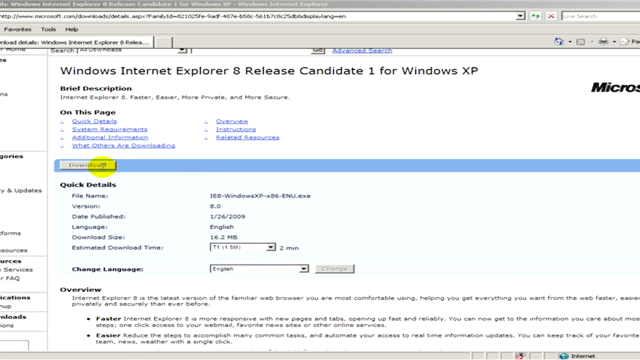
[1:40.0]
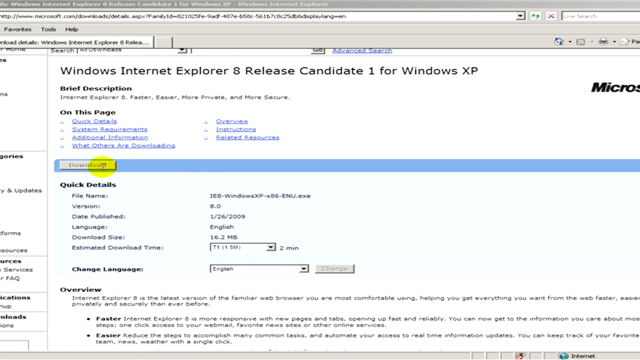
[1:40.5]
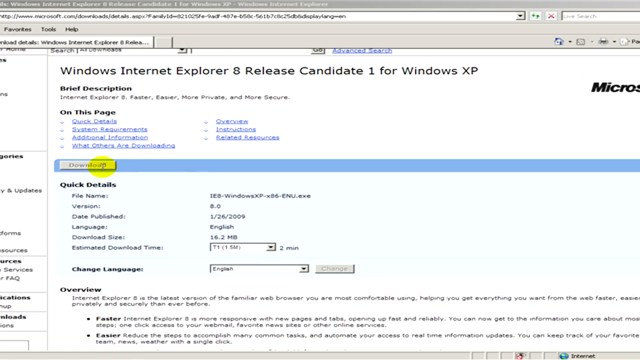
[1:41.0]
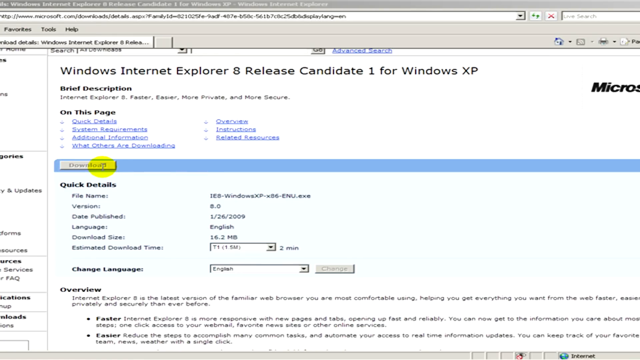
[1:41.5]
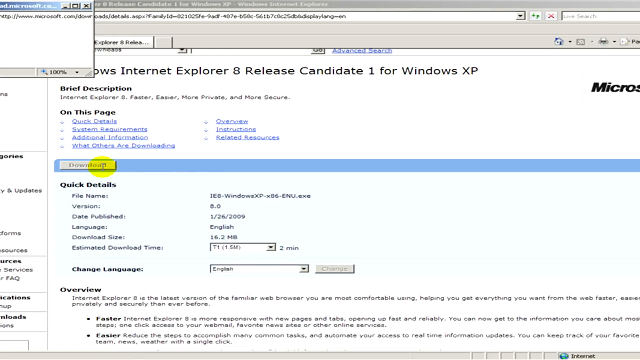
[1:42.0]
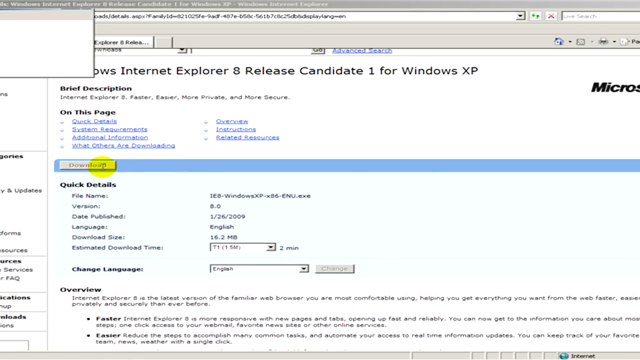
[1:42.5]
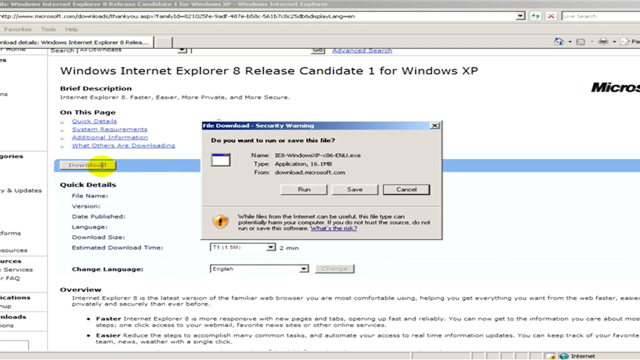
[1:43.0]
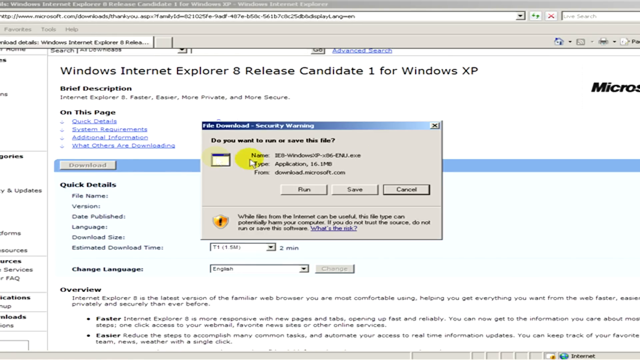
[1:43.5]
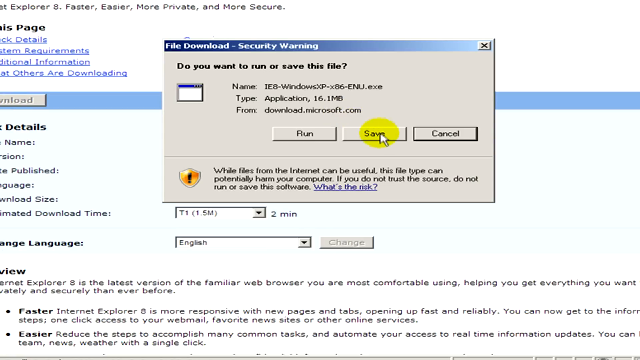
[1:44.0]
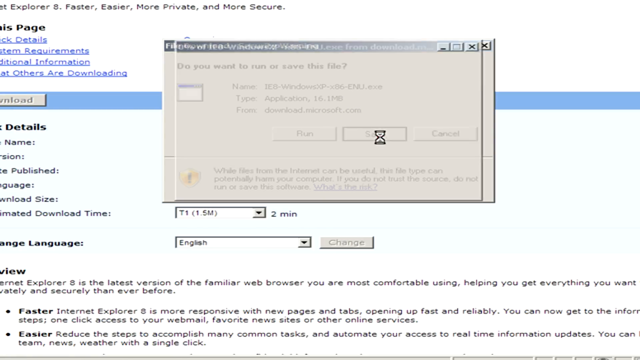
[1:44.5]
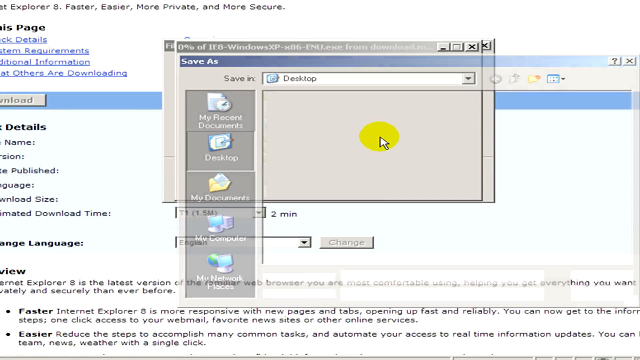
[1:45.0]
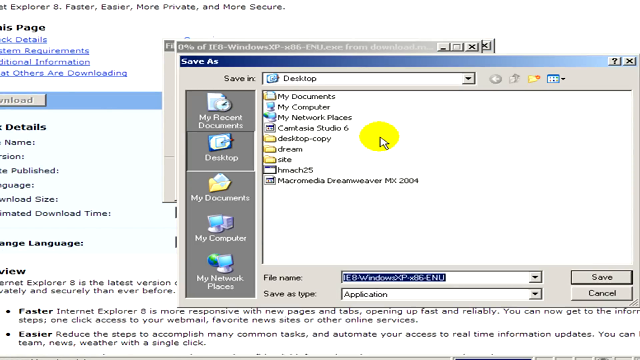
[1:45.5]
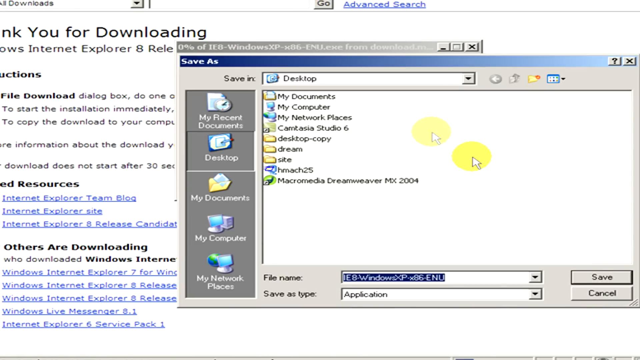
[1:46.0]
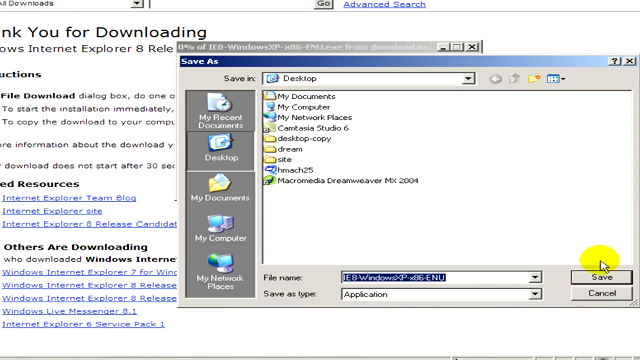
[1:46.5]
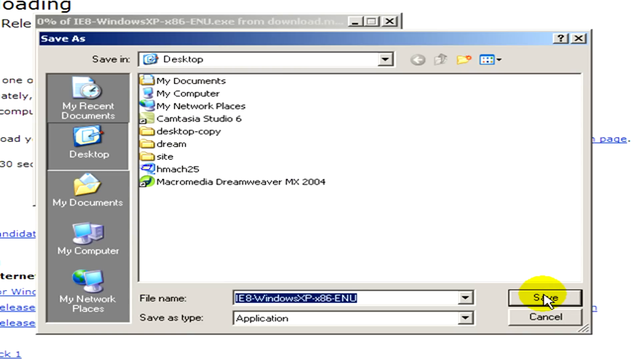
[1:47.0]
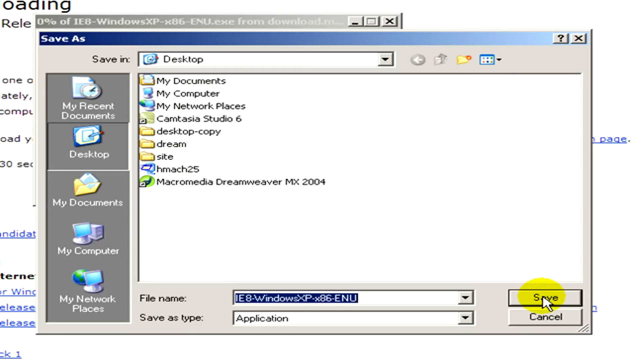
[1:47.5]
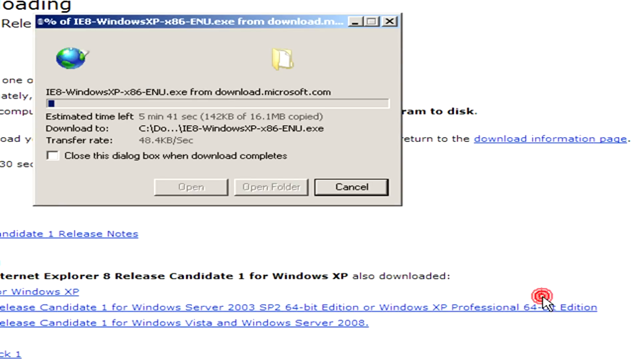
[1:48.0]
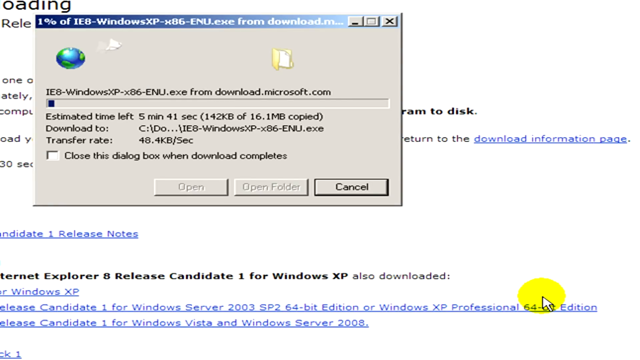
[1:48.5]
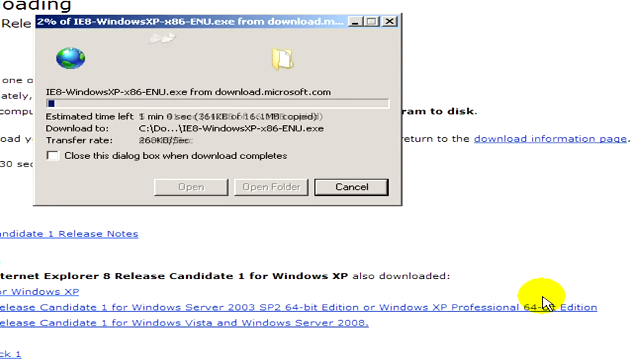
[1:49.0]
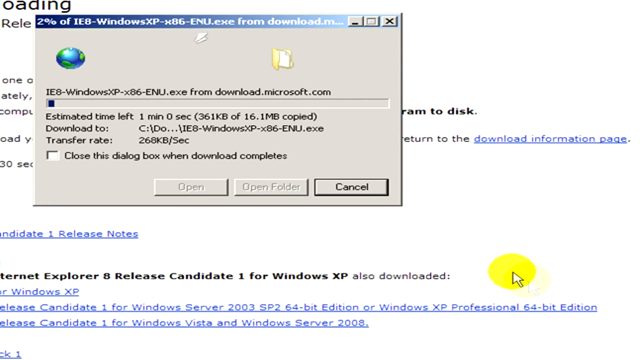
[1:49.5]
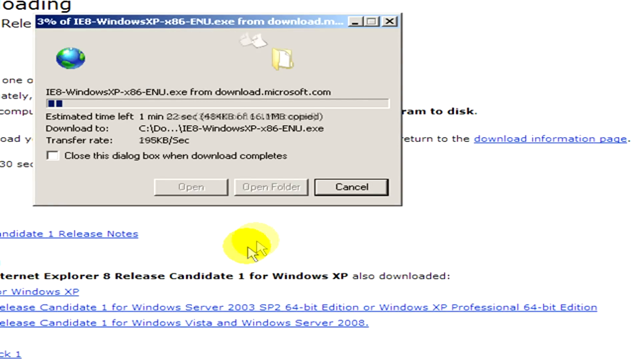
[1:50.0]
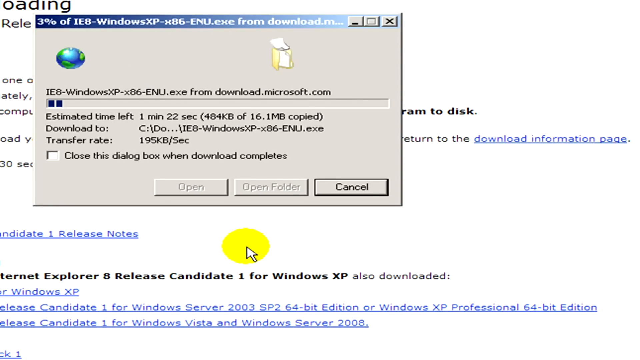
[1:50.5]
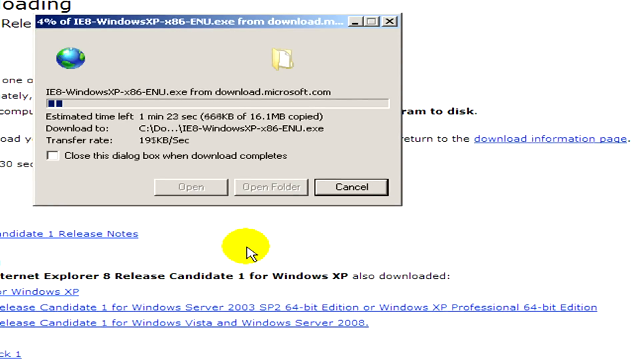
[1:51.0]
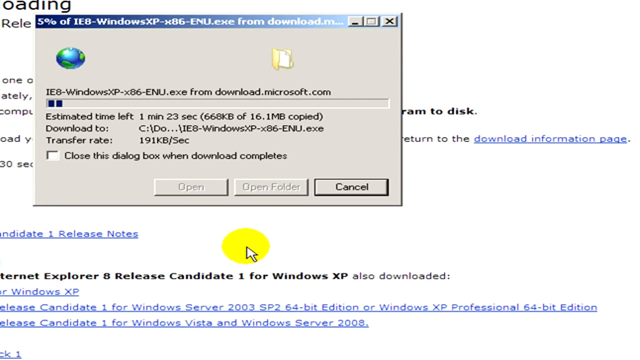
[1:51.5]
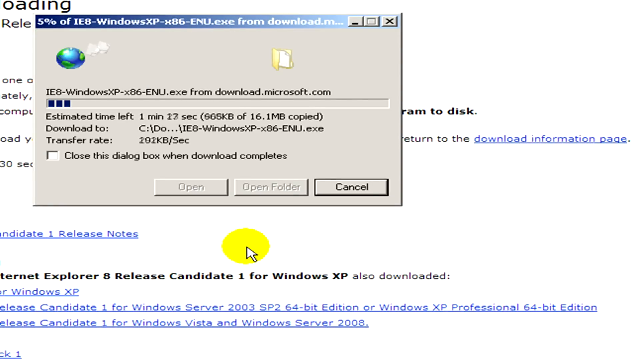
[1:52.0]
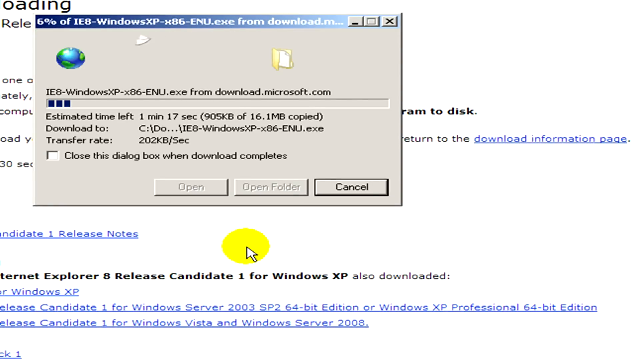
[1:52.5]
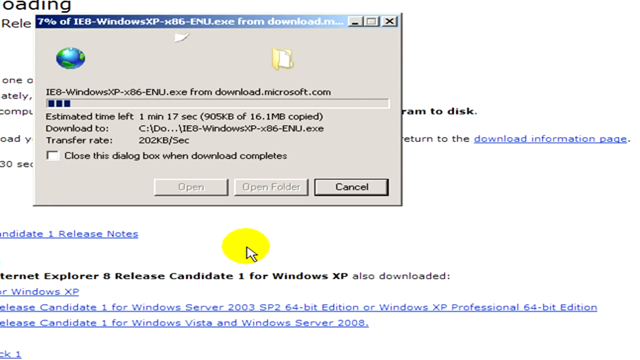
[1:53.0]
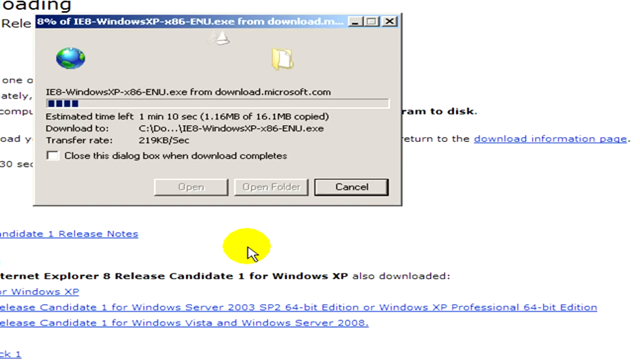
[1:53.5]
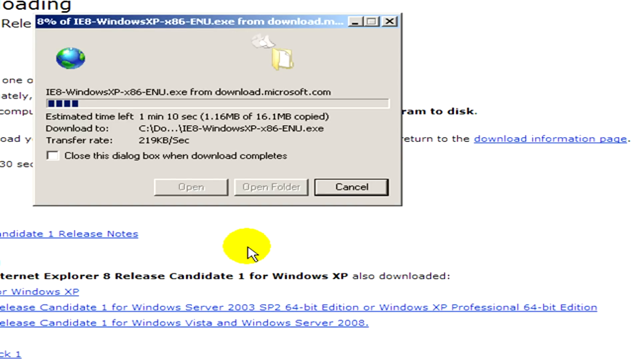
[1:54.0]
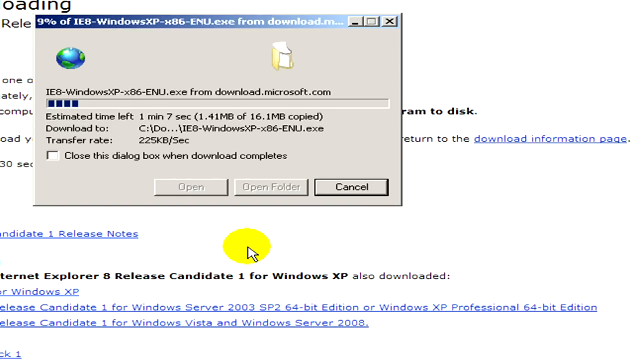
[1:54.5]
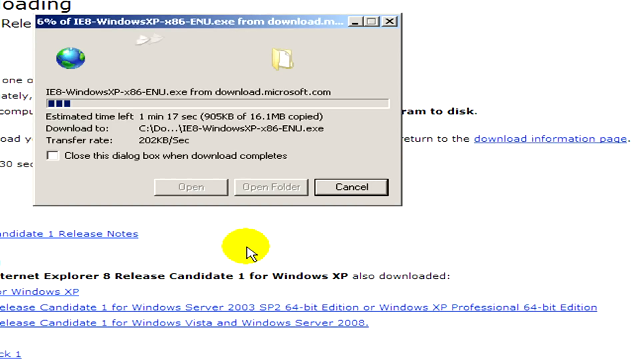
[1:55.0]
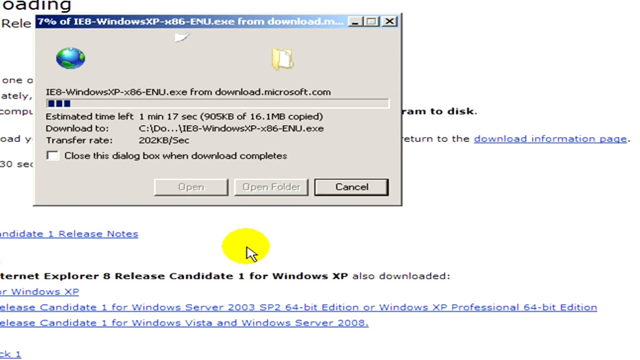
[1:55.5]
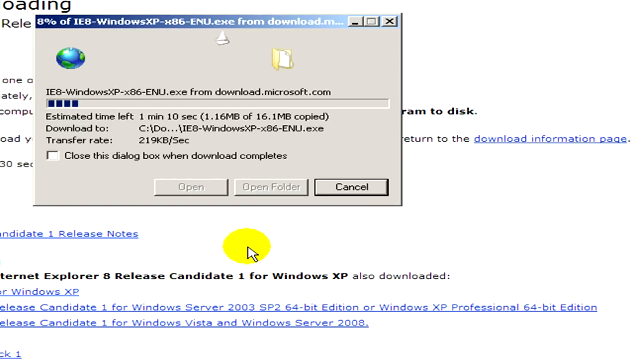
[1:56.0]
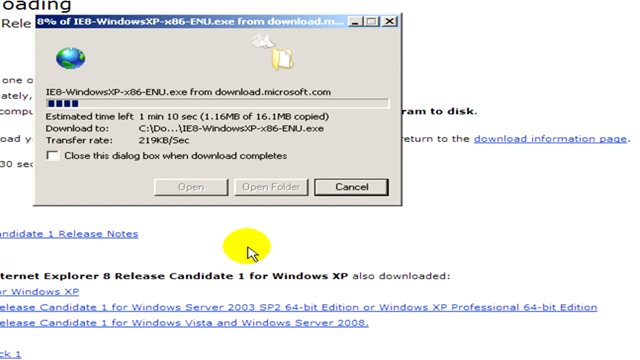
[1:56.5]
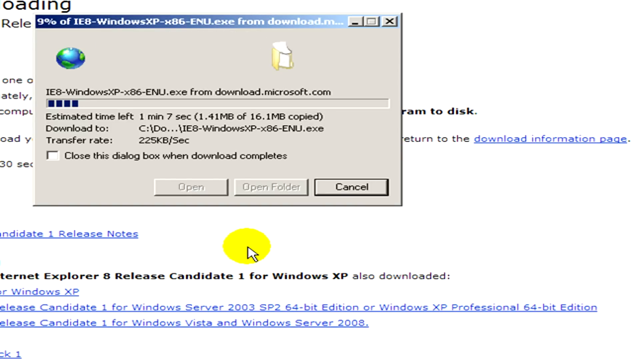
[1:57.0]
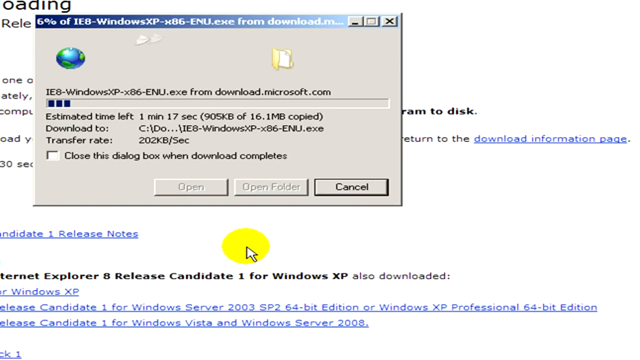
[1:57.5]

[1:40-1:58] After the download button is clicked, a pop-up appears asking "do you want to run this or save this file?" Save is clicked, and the Internet Explorer 8 file is saved to the computer and starts downloading. The estimated download time shown is one minute and 17 seconds, at around one megabyte per second. No people appear; only the Internet Explorer 8 download in Windows is shown, with the pages on the computer changing. The woman seen earlier is not present, though she is presumably the one presenting this tutorial. The video ends after the file starts downloading.